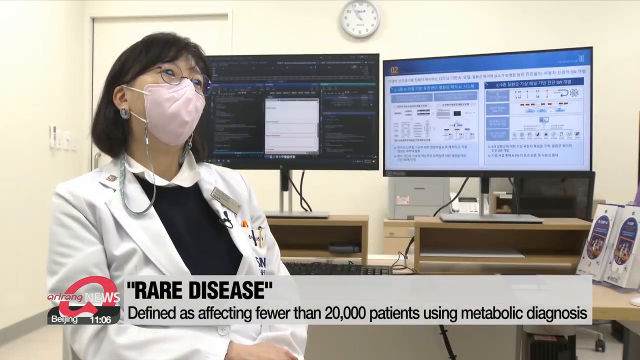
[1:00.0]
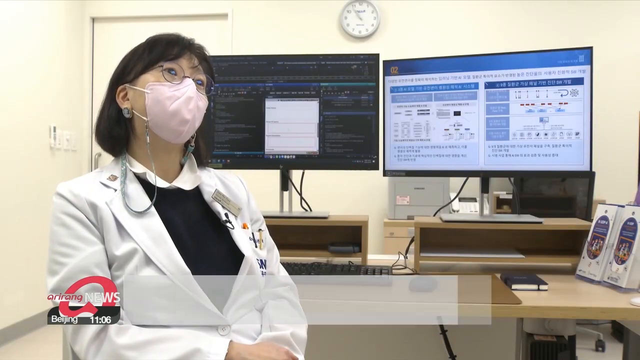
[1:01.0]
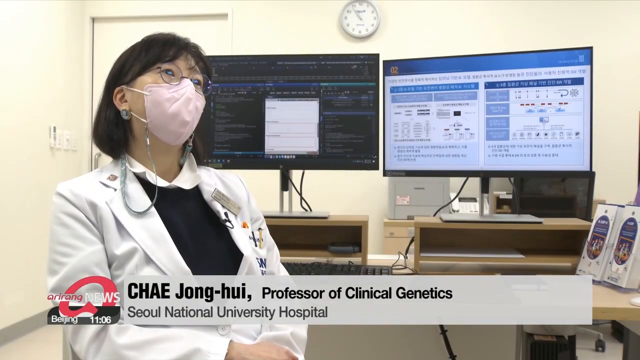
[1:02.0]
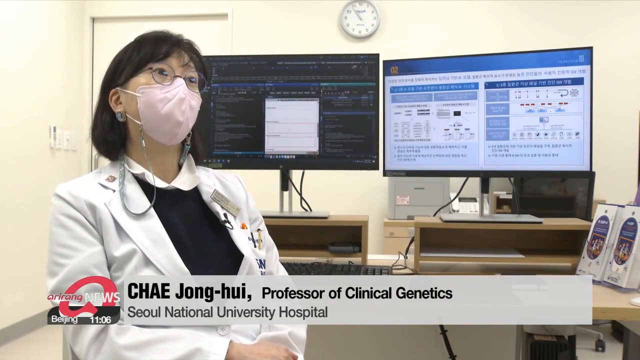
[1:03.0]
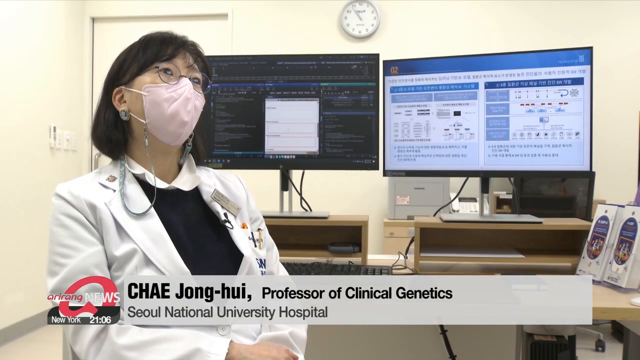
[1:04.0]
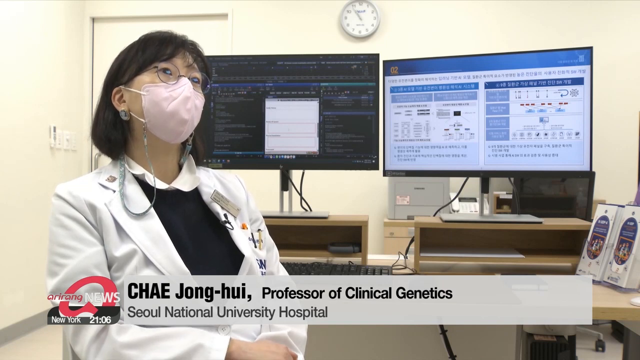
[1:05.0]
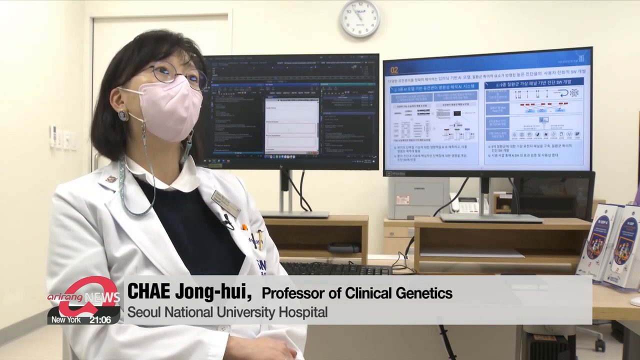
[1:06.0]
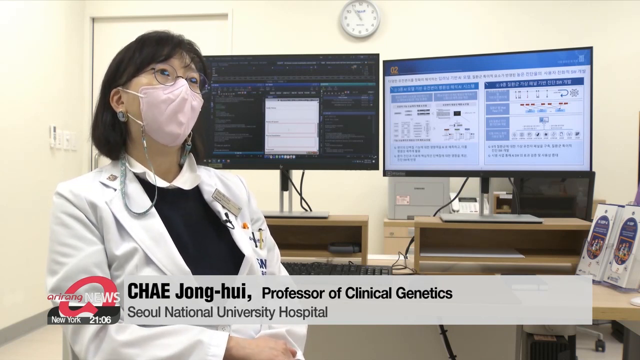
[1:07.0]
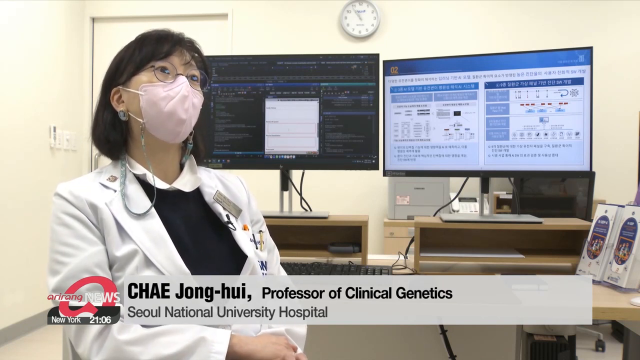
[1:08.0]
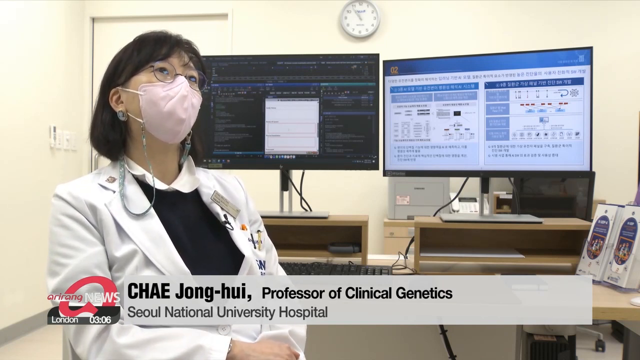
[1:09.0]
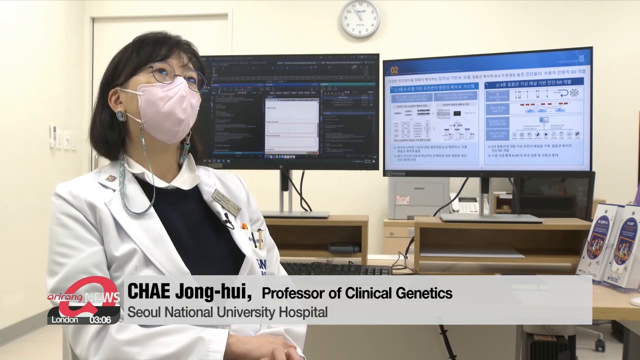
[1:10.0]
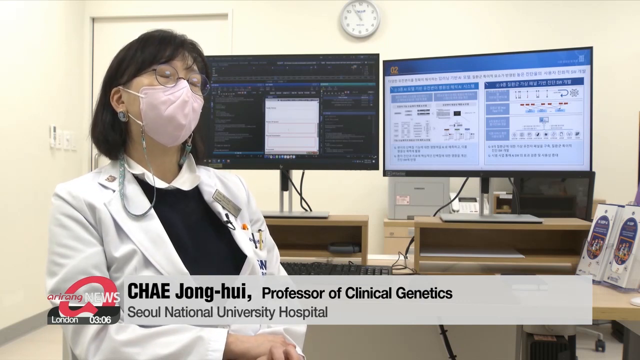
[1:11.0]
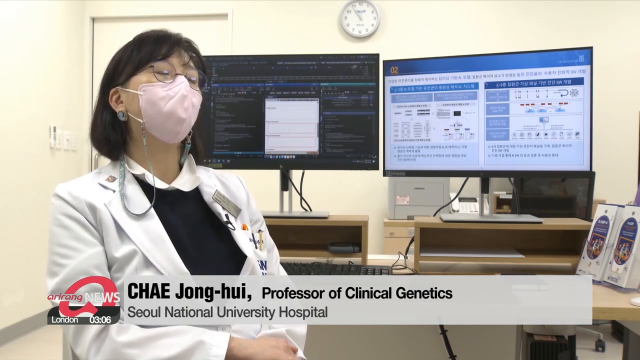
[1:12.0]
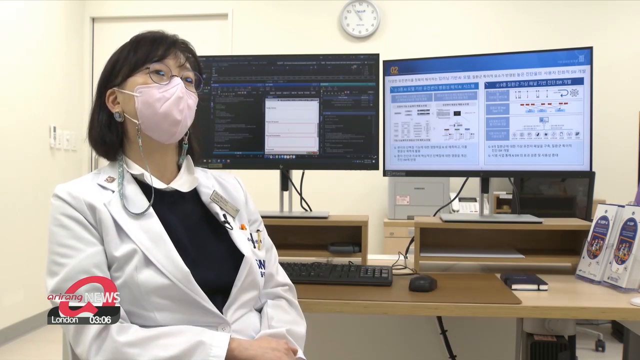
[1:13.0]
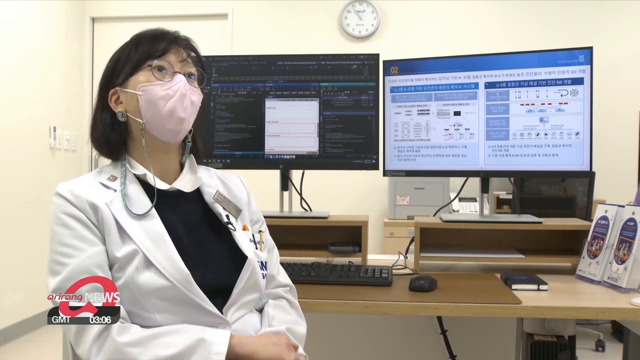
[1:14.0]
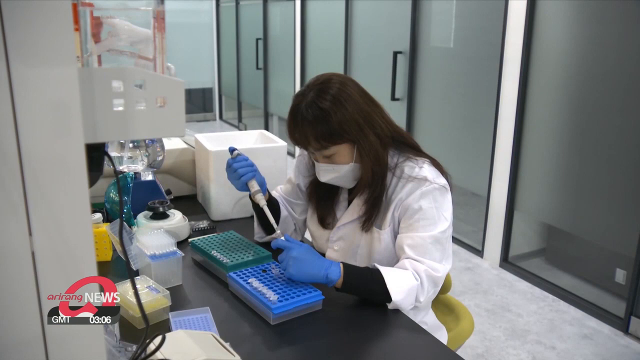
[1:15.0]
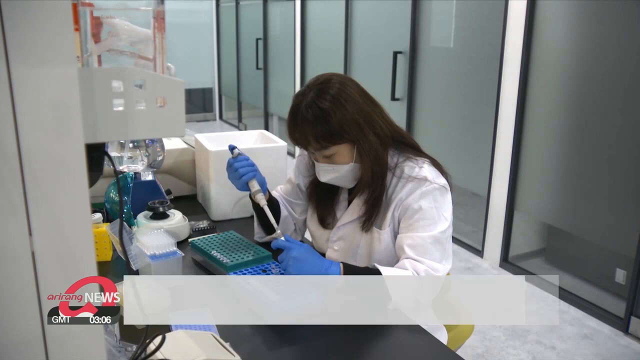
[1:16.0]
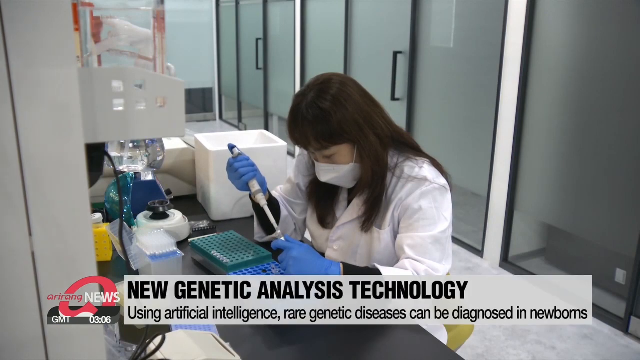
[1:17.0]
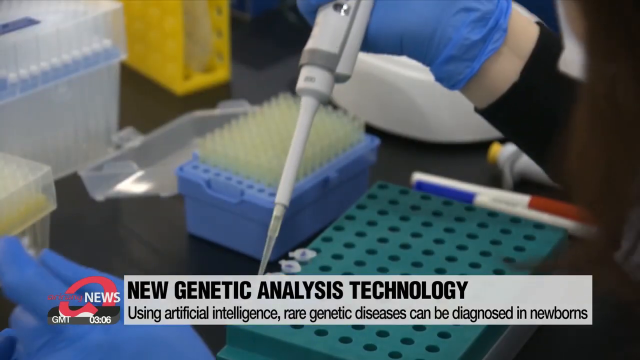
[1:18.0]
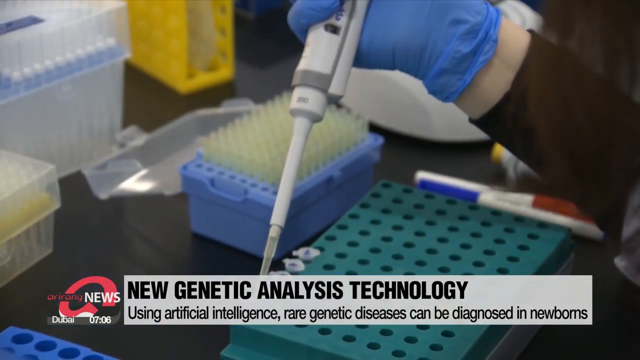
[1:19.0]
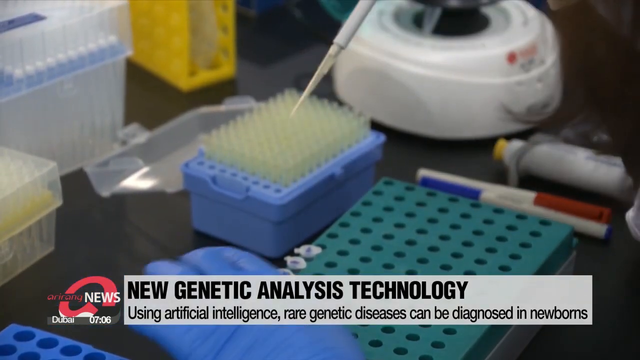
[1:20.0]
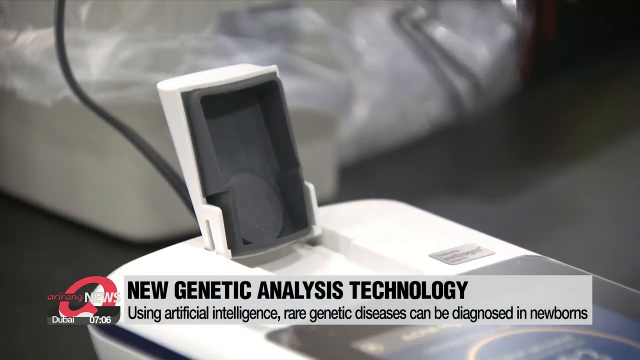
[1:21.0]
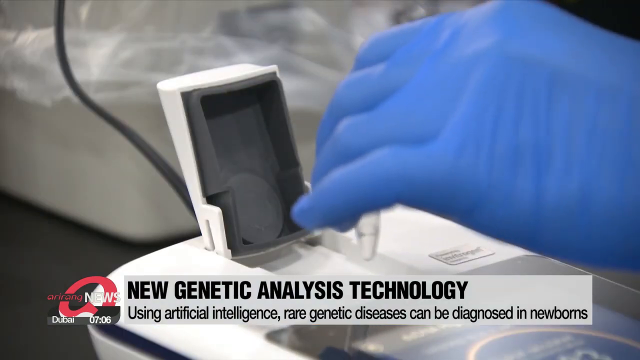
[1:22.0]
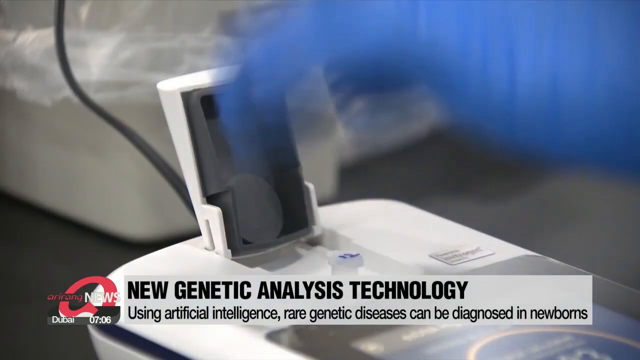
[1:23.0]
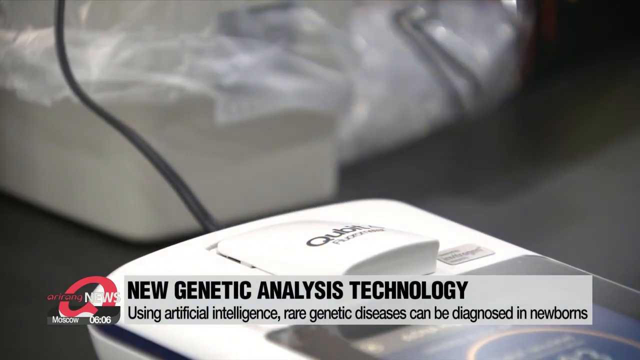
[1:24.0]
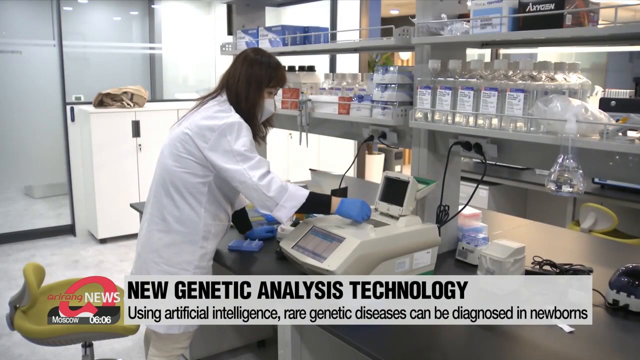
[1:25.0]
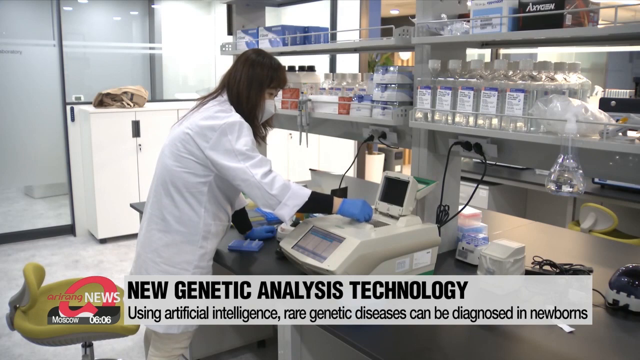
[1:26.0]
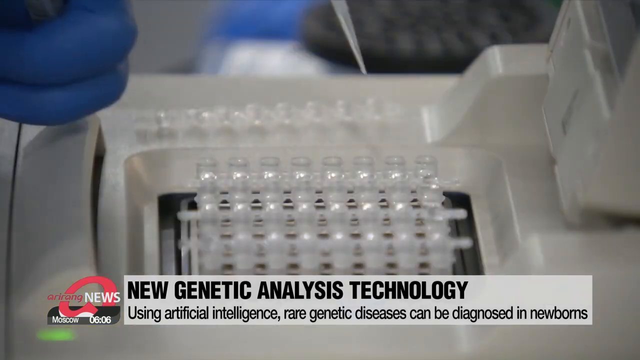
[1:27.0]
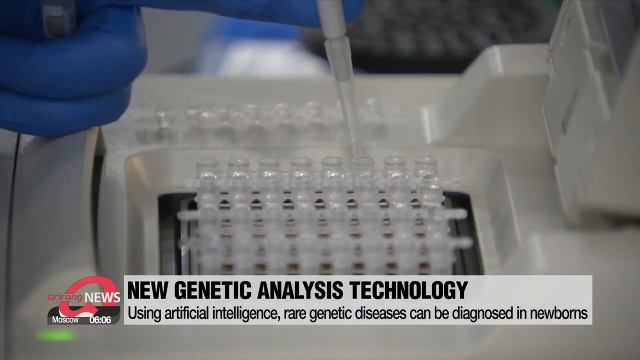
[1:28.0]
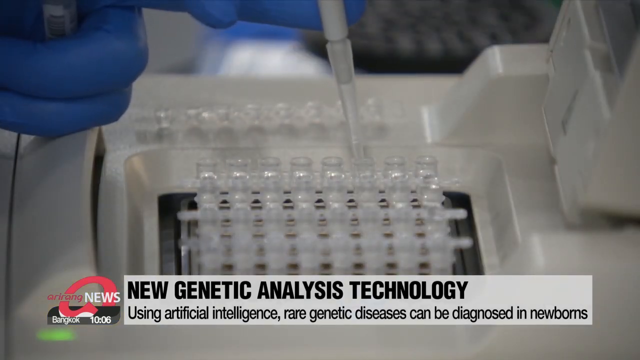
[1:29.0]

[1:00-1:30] The interview is with Chae Jonghui, Professor of Clinical Genetics at Seoul National University Hospital. She wears a black shirt over a white collared shirt and a white lab coat, and has short hair with bangs and a mask. She appears to be in an office, with two monitors next to her and some brochures; it is a simple office with white walls and a clock hanging on the wall. She looks toward the right side of the screen as she is interviewed. The scene changes to a lab, where a woman in blue latex gloves and a protective gown injects something into vials in what looks like a silicone tray. The crawler reads "new genetic analysis technology using artificial intelligence, rare genetic diseases can be diagnosed in newborns." The vials are then placed into what looks like a centrifugal machine, and another woman puts liquid into clear vials.